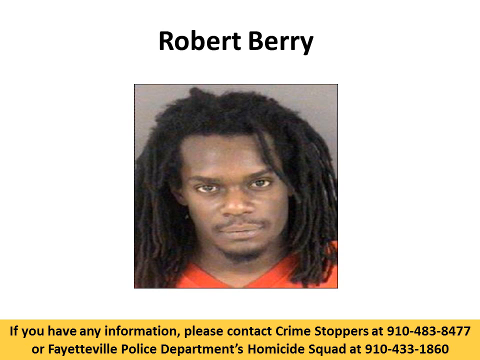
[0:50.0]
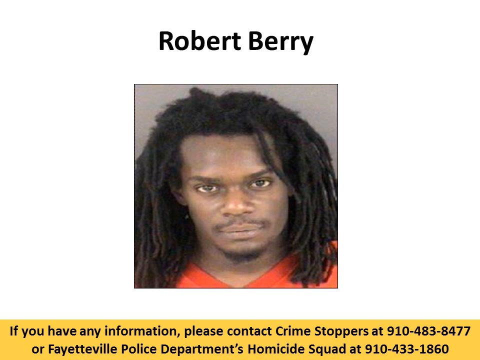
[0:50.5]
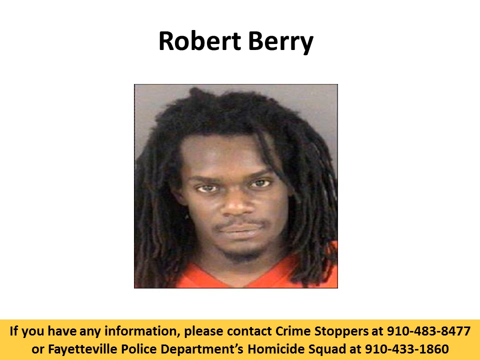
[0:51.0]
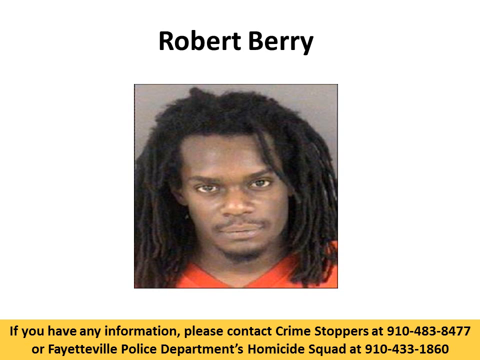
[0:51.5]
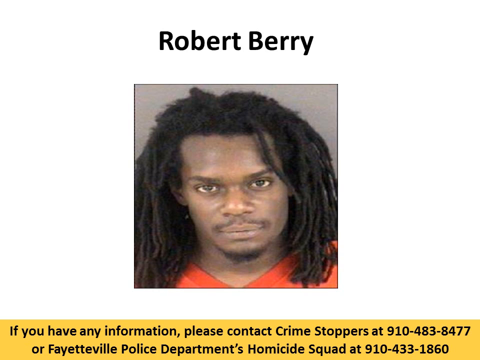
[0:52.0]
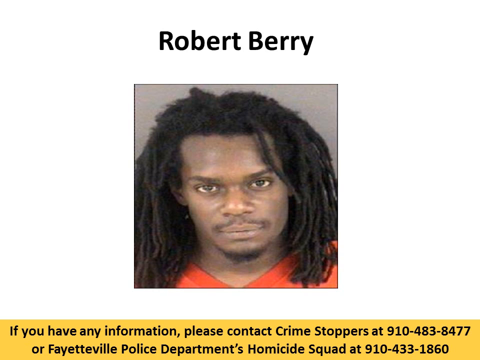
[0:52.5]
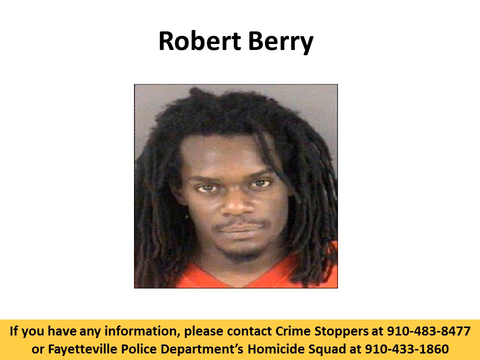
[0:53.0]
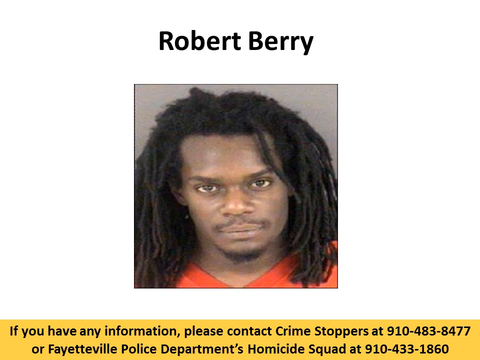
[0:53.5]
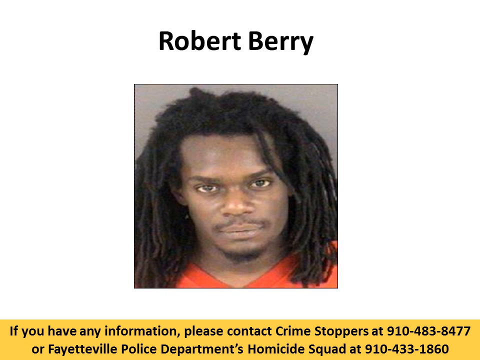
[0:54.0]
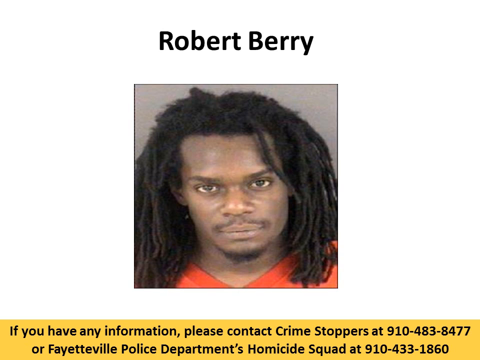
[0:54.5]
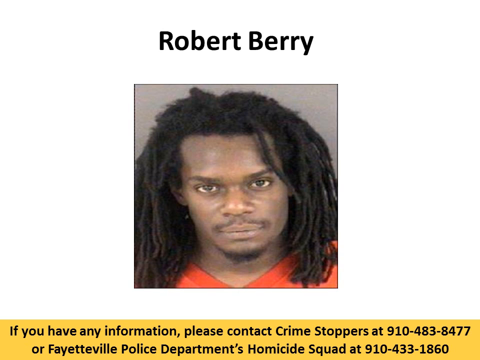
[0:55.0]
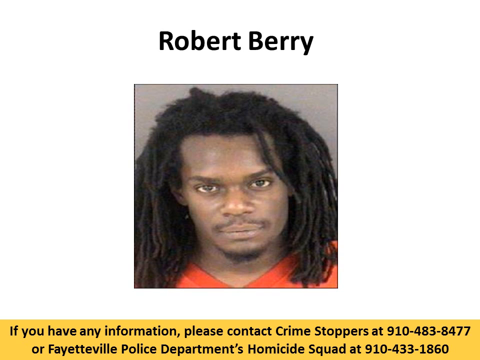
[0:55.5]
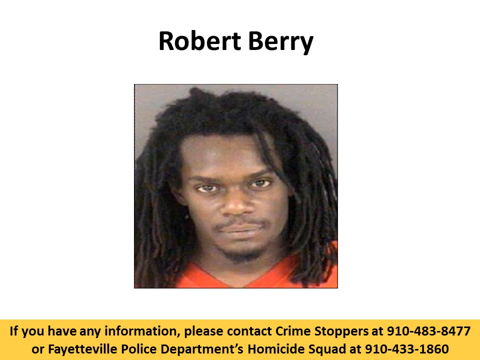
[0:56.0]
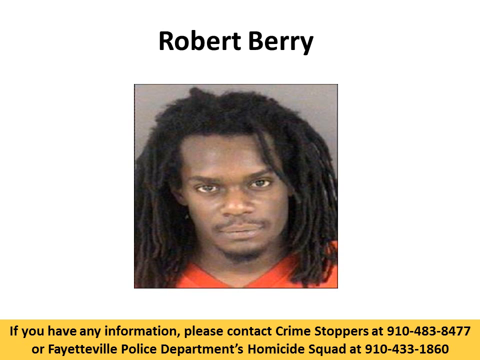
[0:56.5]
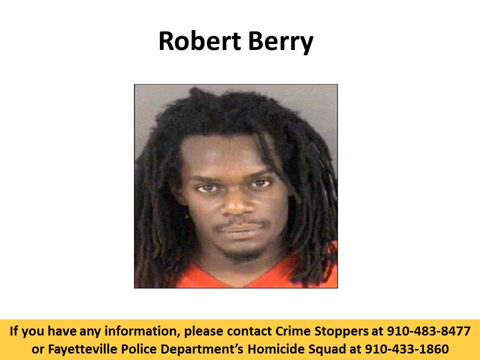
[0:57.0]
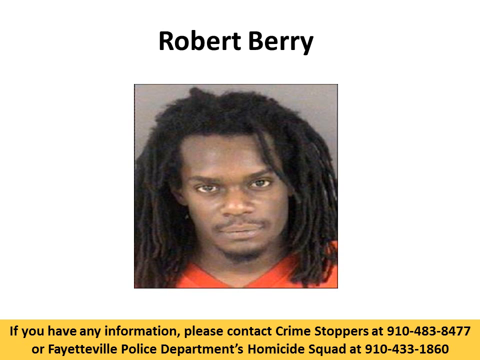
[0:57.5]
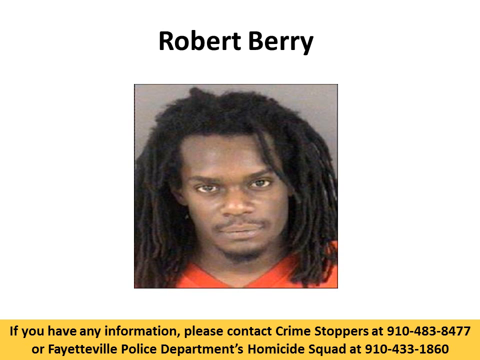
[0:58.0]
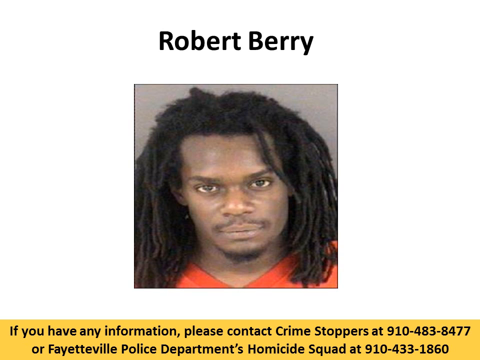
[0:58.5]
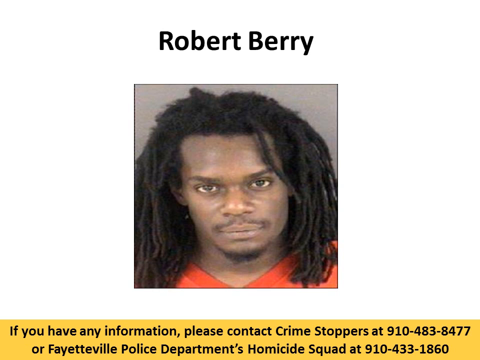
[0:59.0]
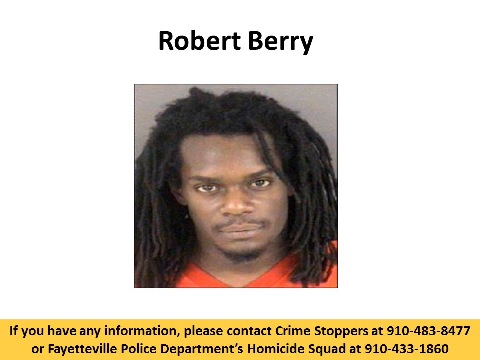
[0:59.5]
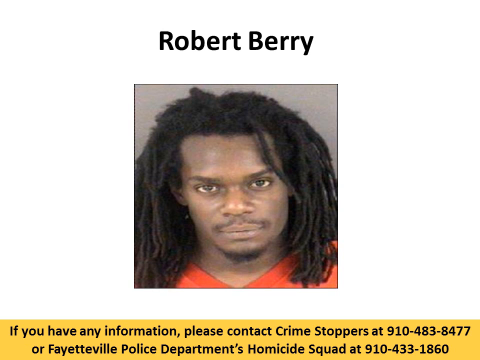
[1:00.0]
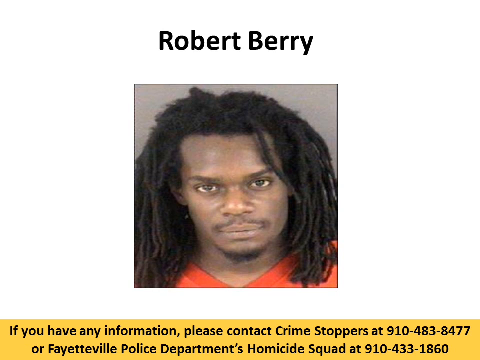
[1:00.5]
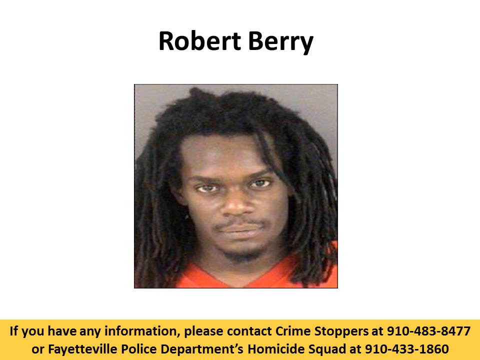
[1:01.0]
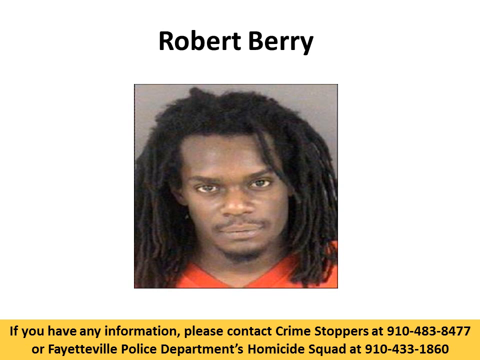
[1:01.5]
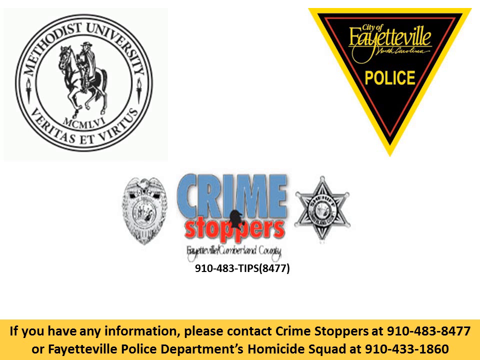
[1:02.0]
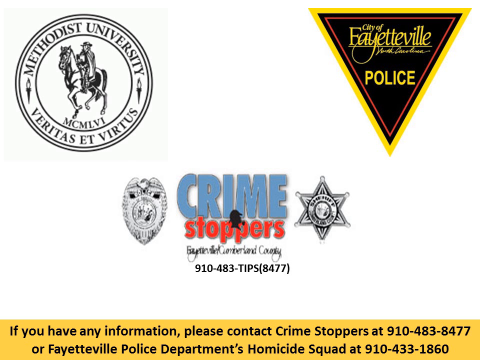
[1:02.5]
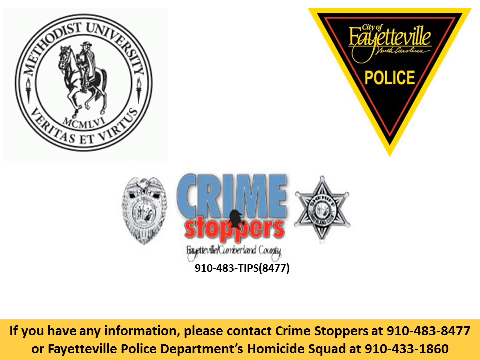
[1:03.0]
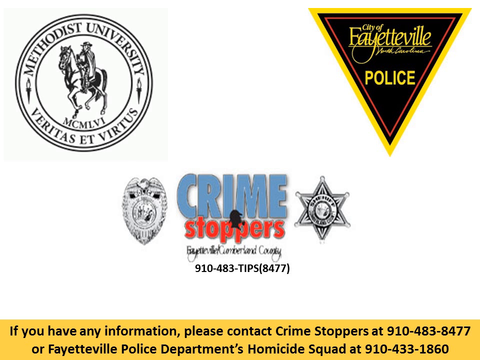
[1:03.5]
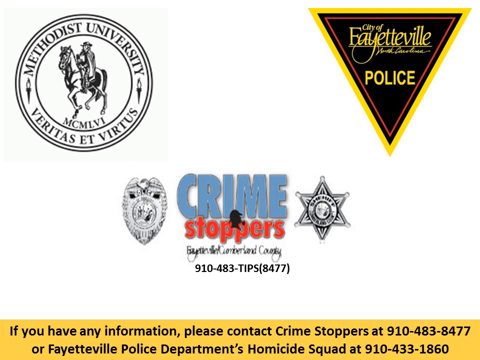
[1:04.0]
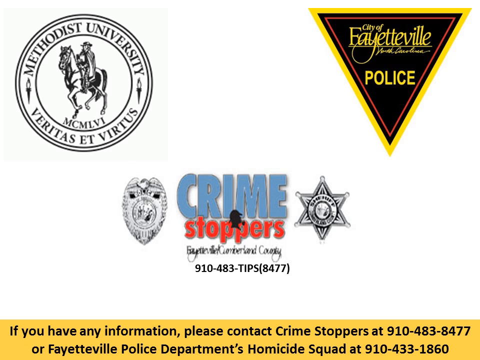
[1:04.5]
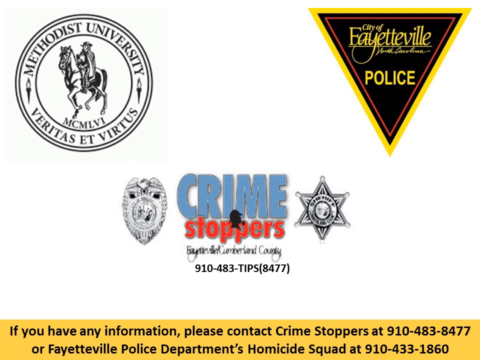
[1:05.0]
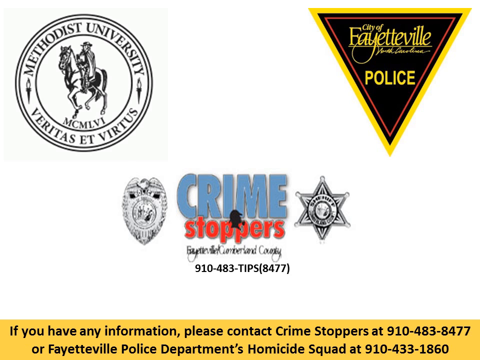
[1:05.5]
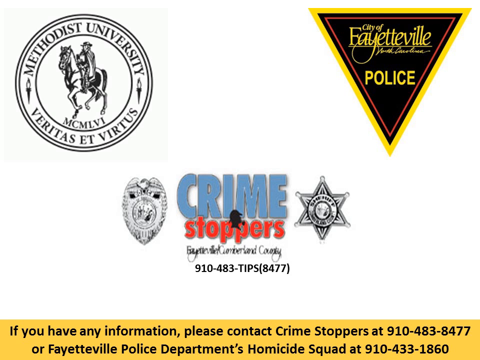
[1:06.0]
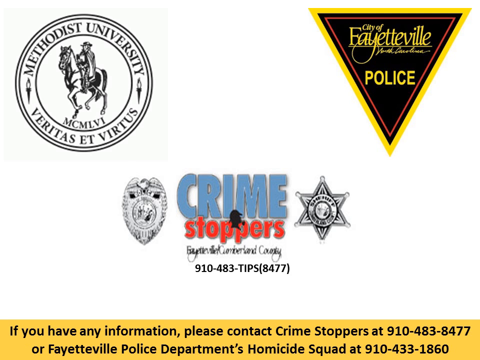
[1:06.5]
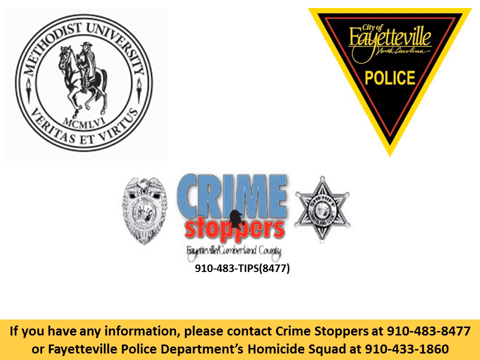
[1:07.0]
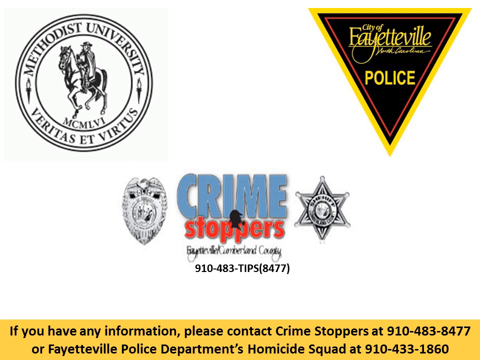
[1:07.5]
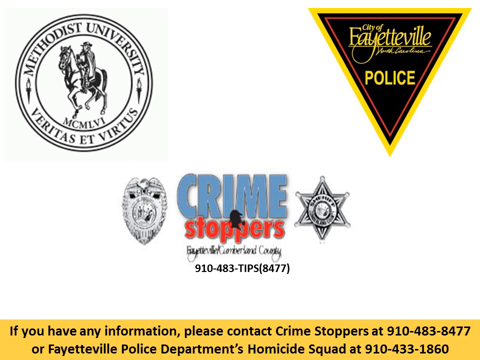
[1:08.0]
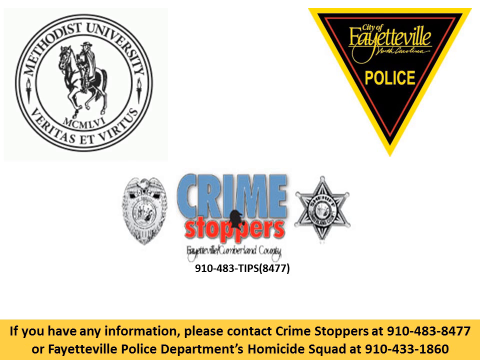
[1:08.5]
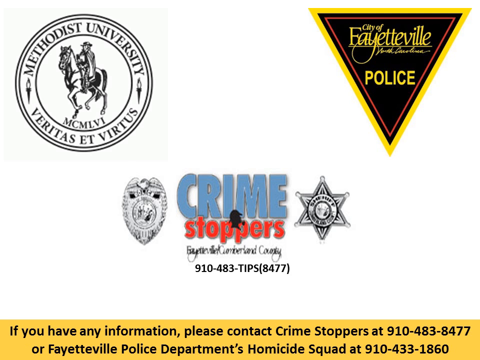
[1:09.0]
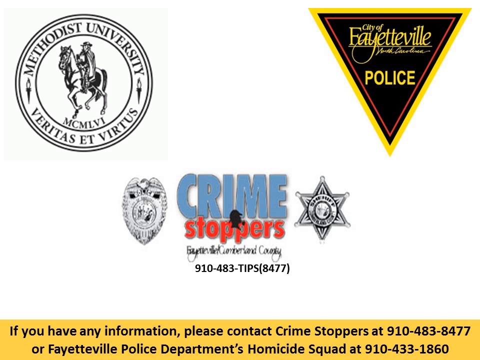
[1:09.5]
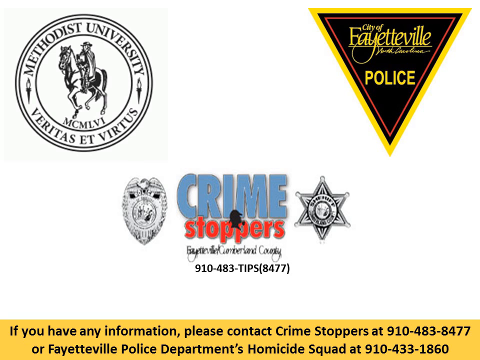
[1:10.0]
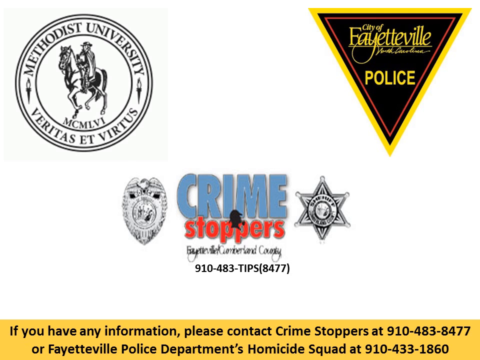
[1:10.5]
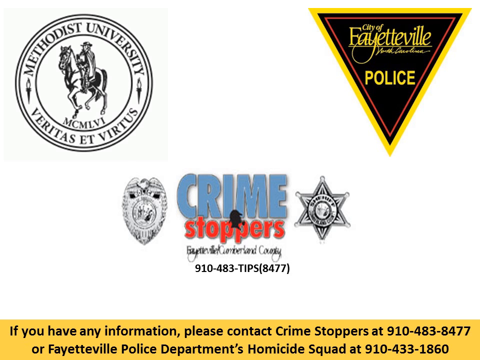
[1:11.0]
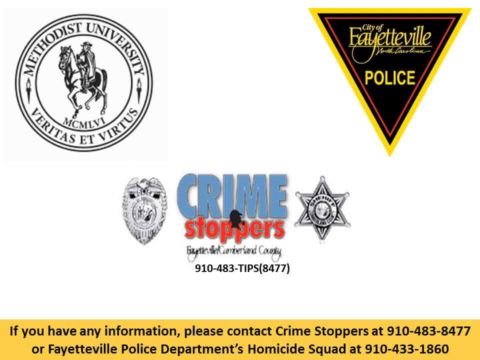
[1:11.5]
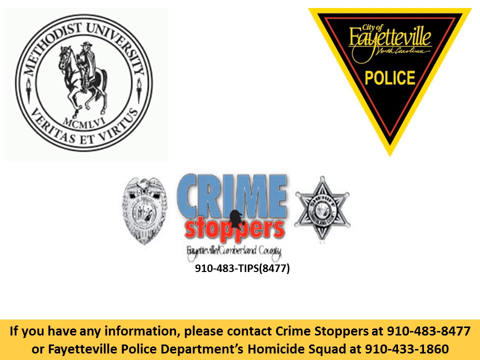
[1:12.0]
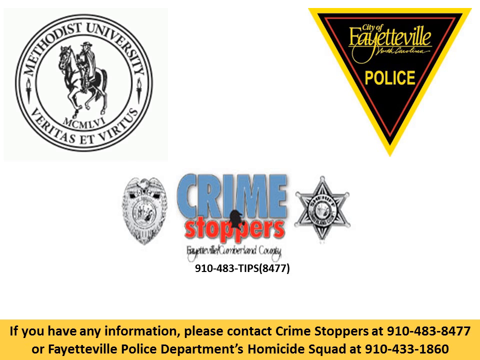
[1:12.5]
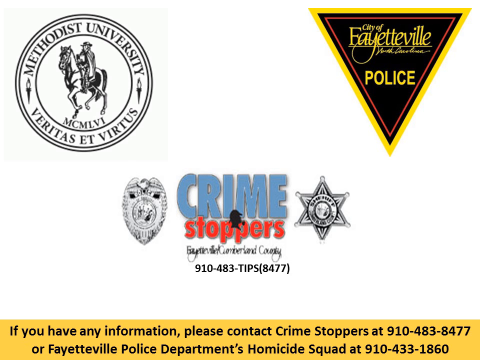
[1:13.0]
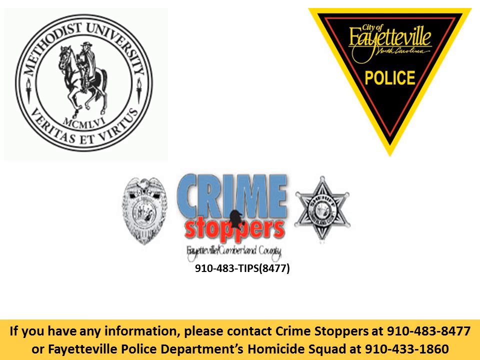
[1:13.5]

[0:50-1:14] An image shows an African-American man with facial hair. At the top of the screen is the name "Robert Berry." He looks like he is wearing an orange outfit, possibly a prison outfit. At the bottom of the screen, text reads "if you have any information, please contact Crime Stoppers at 910-483-8477." The screen is almost all white, except for the image of the man and the bottom of the screen, which has a yellow background with black letters. The video then cuts to a screen of logos for different city representatives. At the top right is the City of Fayetteville police logo, a yellow and black triangle. At the very bottom is the Crime Stoppers logo, with a sheriff's sign to the right and a badge to the left; the word "crime" is in light blue and the word "stoppers" below it is in red. Under that is some unreadable cursive writing and telephone numbers. It says "910-483-TIPS" and gives the numbers for the letters of "tips." At the top left is a logo for Methodist University, showing a person riding a horse in the middle, inside a circle shape. Underneath the circle it says "Veritas Et Virtus."